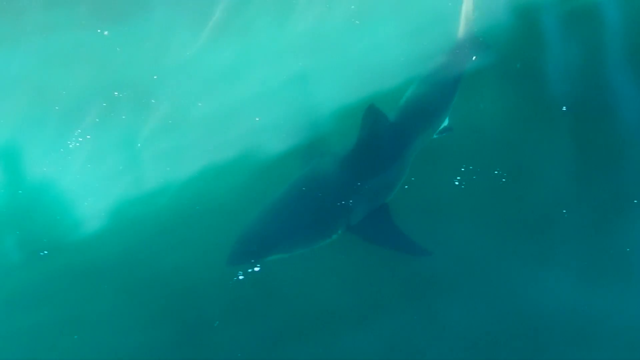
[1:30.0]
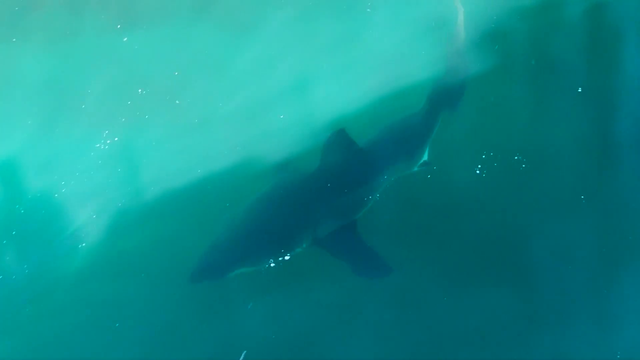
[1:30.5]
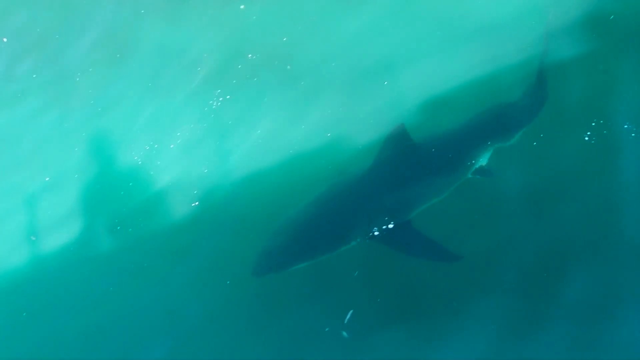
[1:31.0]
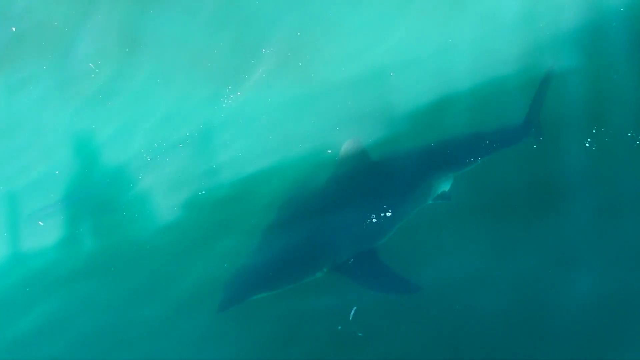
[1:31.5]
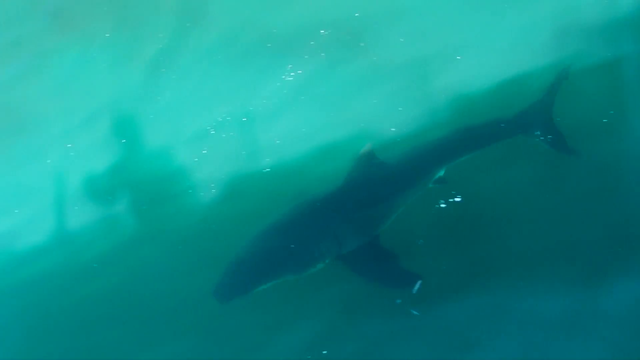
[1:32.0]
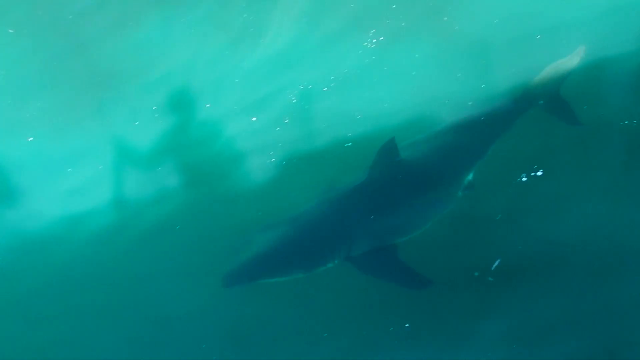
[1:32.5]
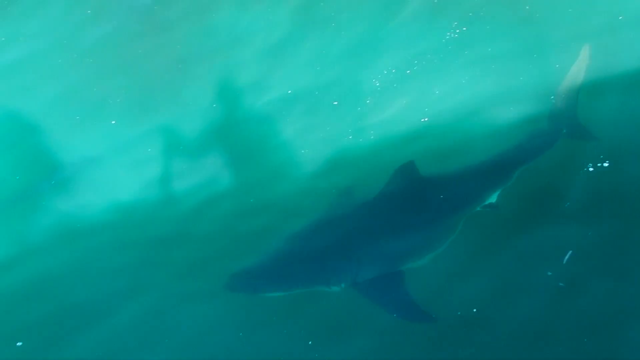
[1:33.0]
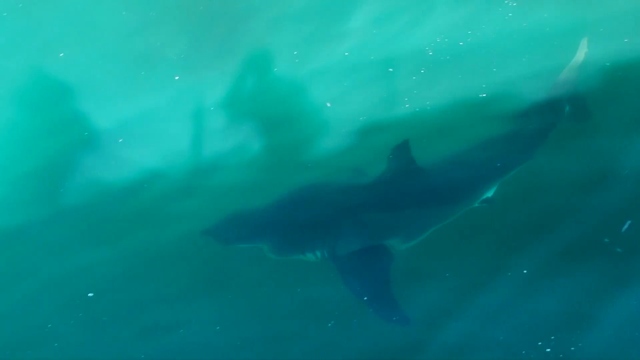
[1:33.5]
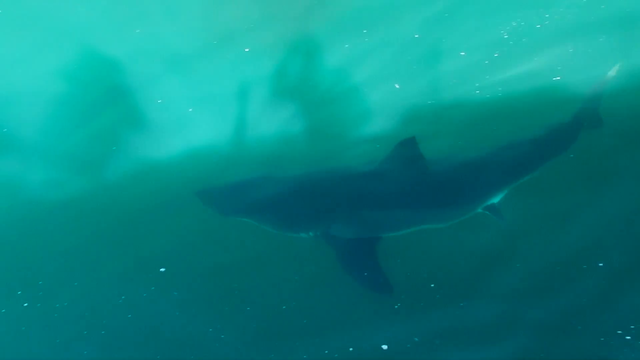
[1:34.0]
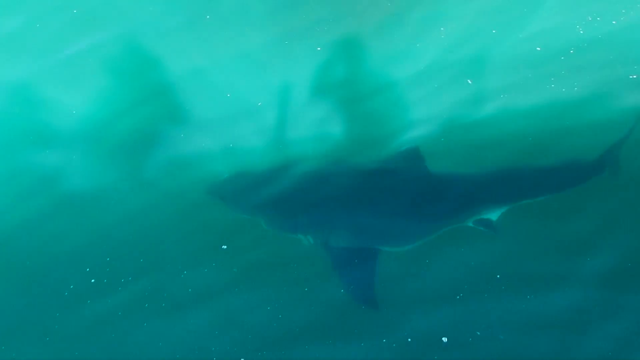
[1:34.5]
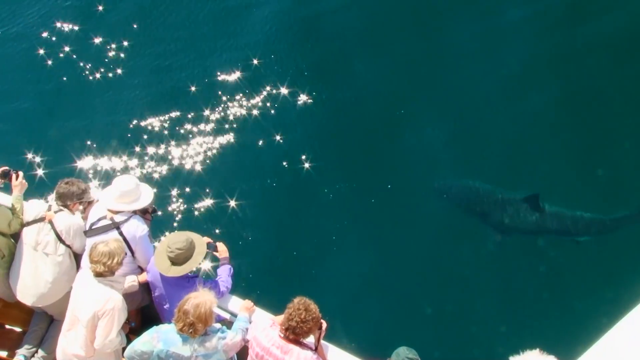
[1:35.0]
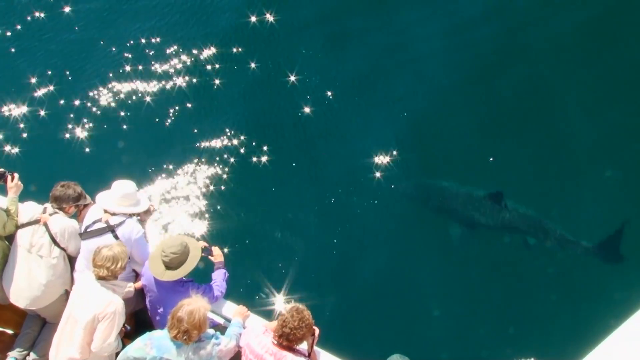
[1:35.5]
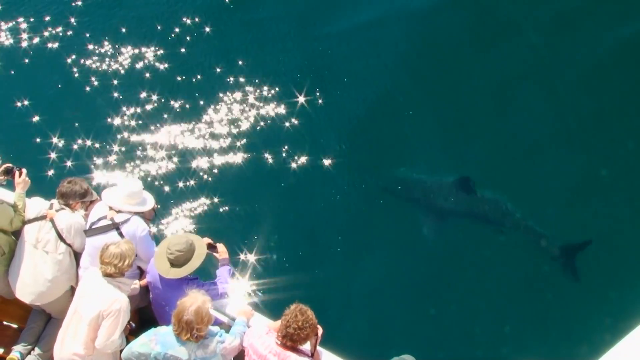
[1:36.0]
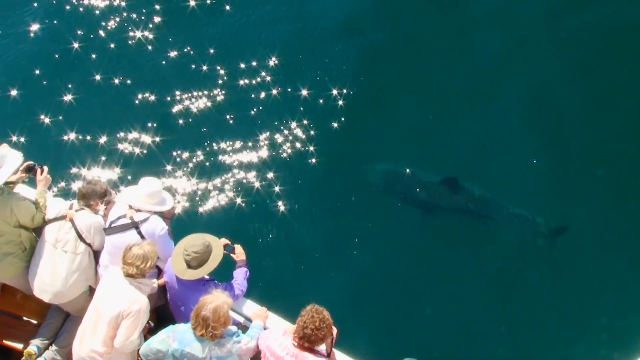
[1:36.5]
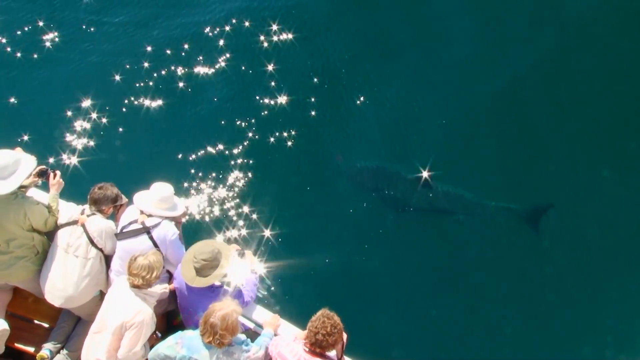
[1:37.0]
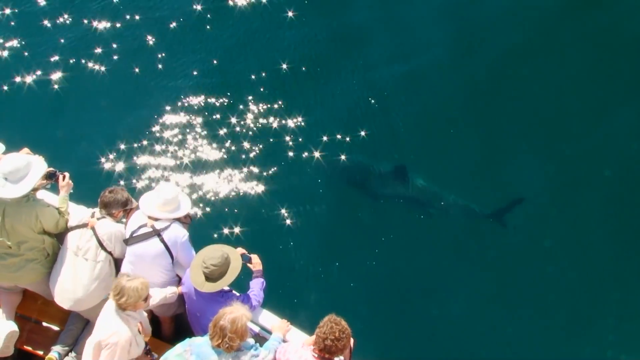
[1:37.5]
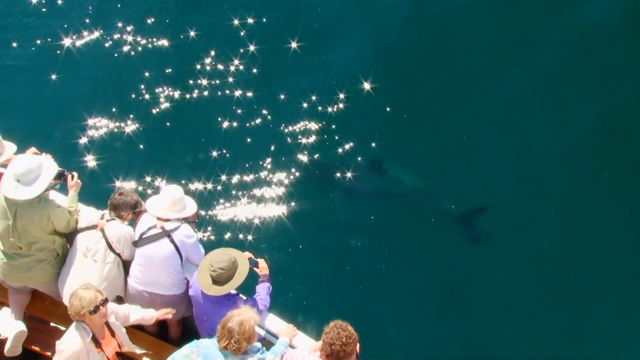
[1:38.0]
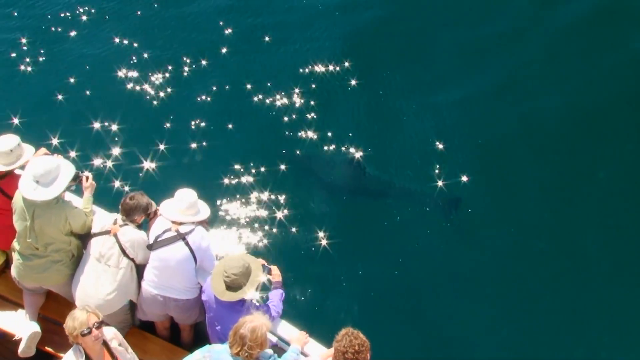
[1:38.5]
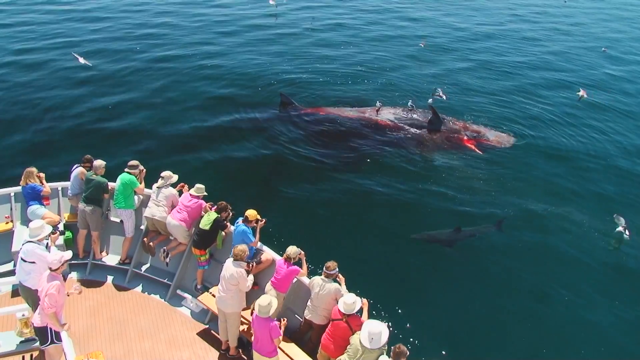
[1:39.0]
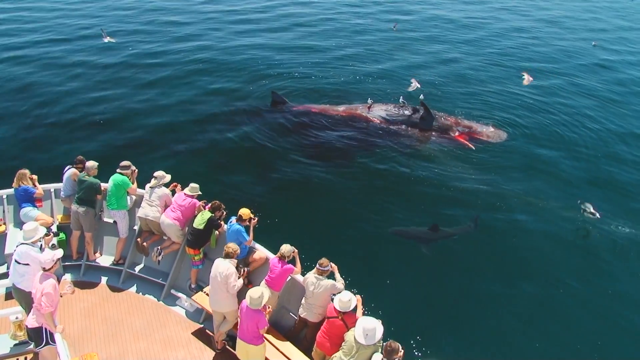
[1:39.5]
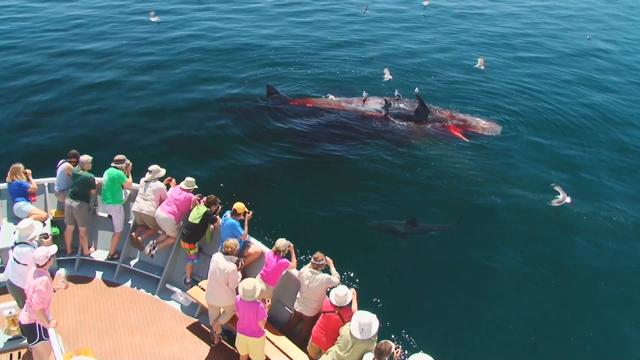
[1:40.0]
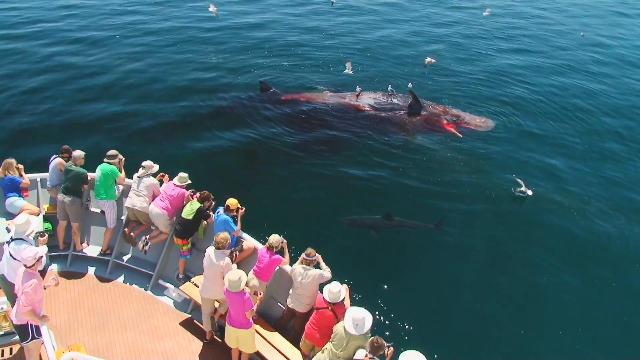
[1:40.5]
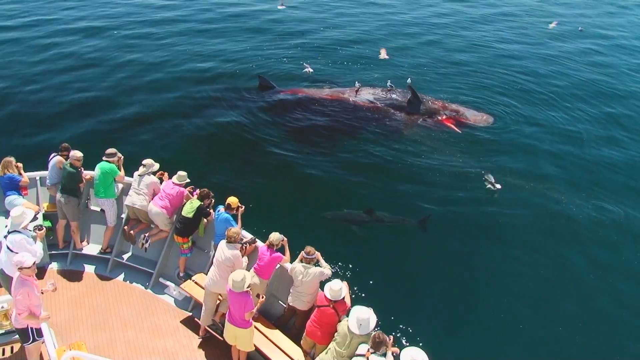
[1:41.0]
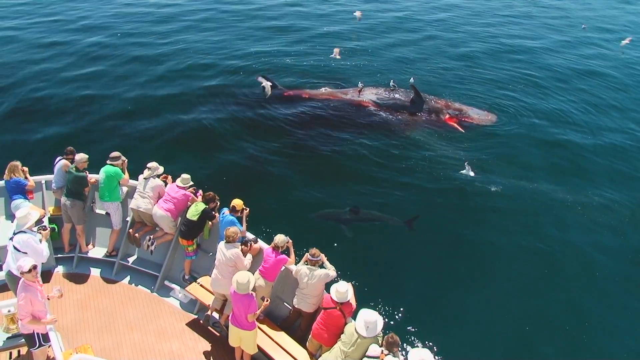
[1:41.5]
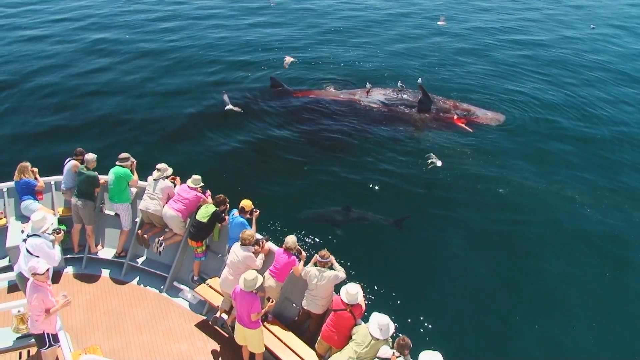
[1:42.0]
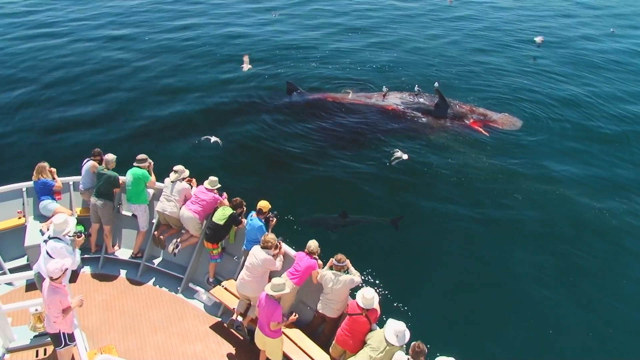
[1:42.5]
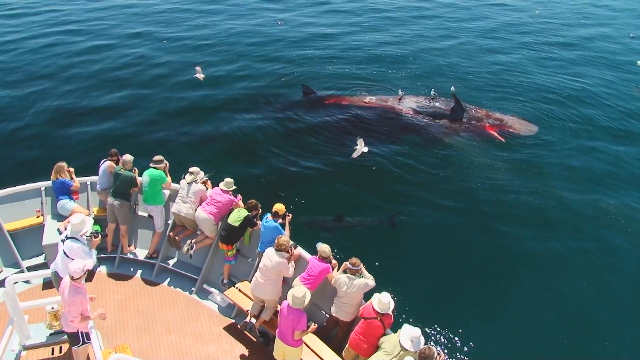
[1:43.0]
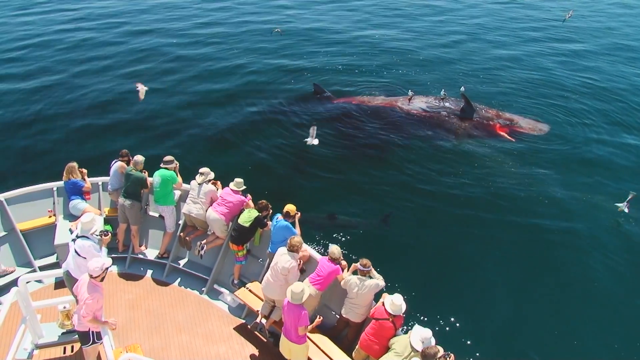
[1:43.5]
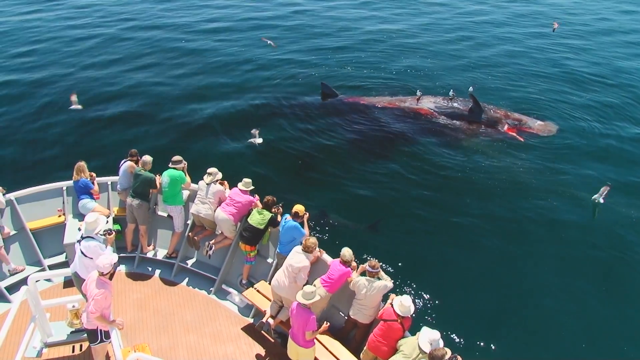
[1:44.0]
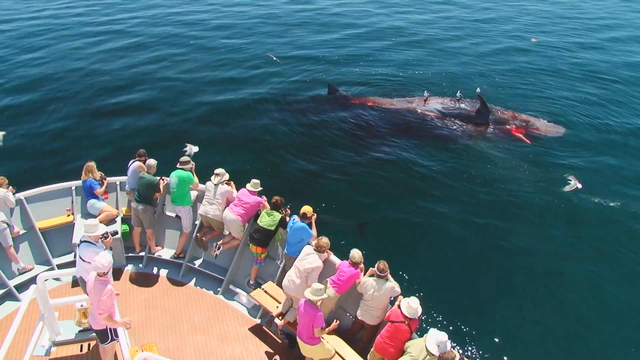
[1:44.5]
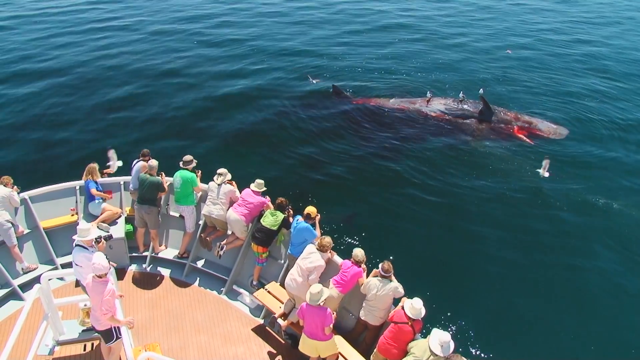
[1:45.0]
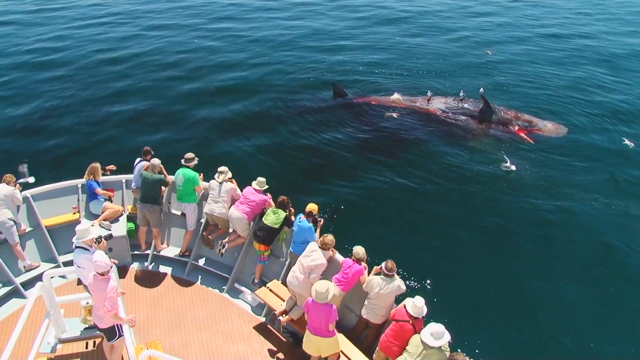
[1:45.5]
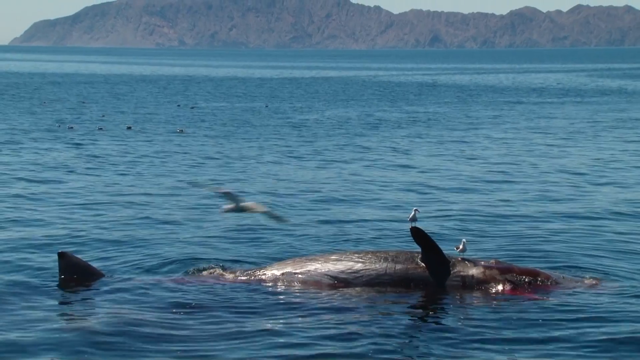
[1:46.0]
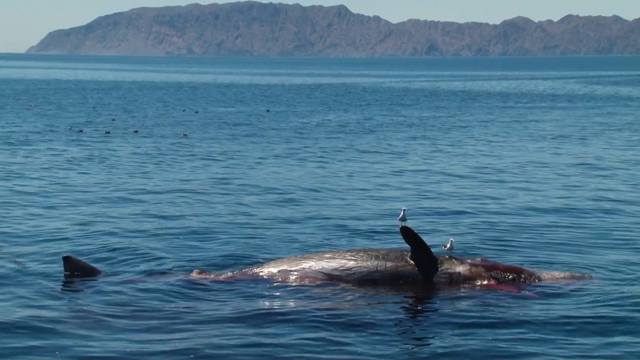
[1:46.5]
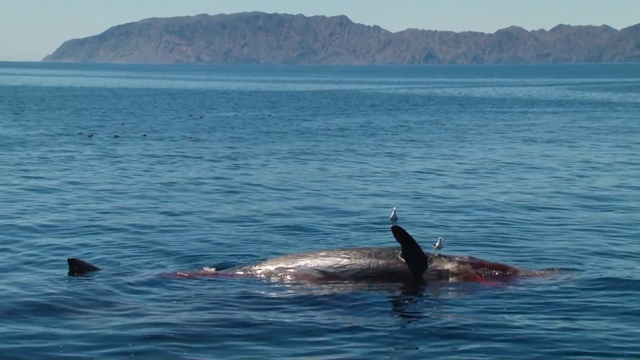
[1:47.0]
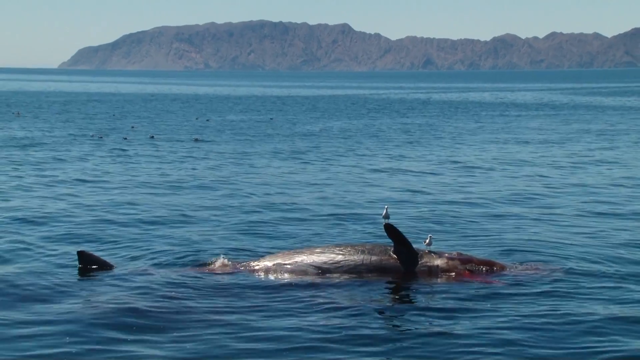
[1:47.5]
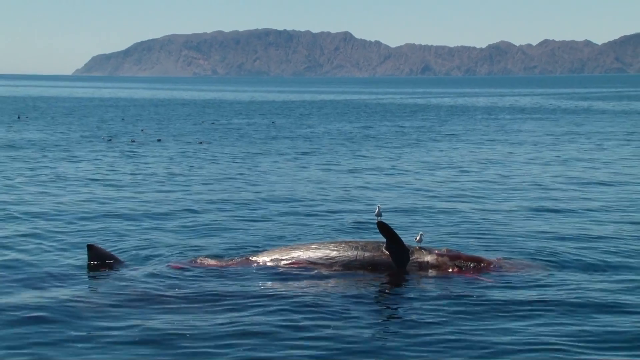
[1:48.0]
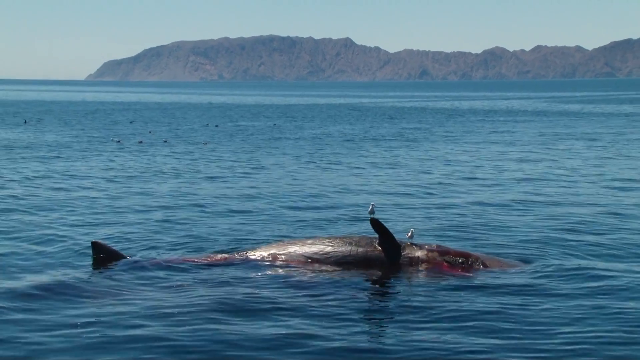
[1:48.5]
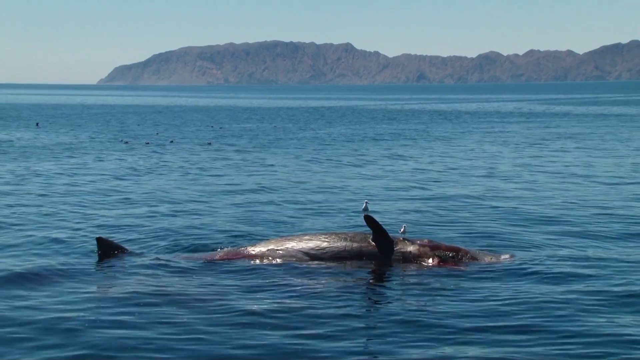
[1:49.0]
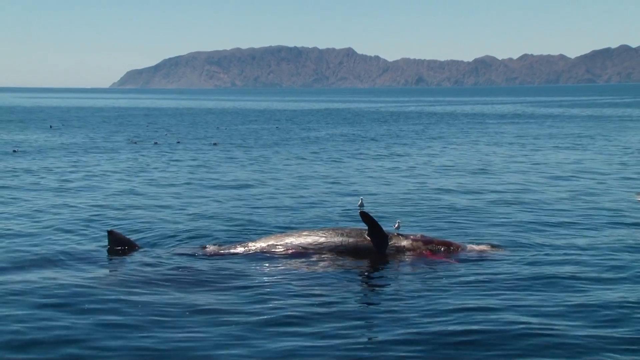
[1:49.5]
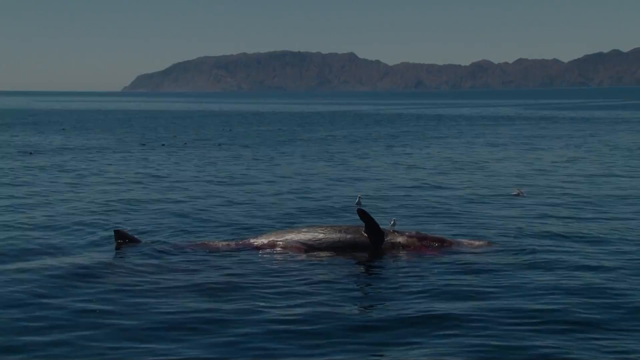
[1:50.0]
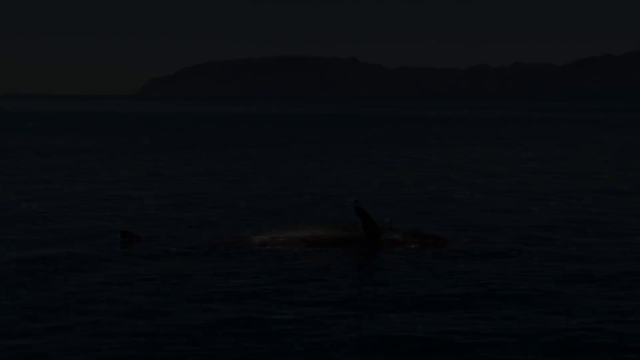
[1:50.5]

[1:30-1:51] Very green water appears, with something in it that is possibly a shark. Sunlight glistens off the water. The people in the boat are visible from underneath, possibly from someone else filming or possibly a reflection off the water. Most of the people appear to be in their early 60s to 70s, mostly women, wearing shorts, spring-colored clothing, and hats. They hold cameras, many with straps that seem to secure the cameras to them. They look off the boat at the whale; nobody stands back, and everyone is at the edge of the boat to get a shot of the whale. Birds are on the water in the background, and waves move across the water. Across the water is land, with what looks like an embankment, a built-up area that is not quite a hill, along the coastline.